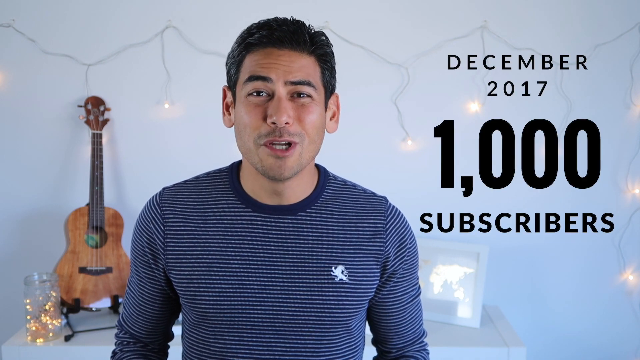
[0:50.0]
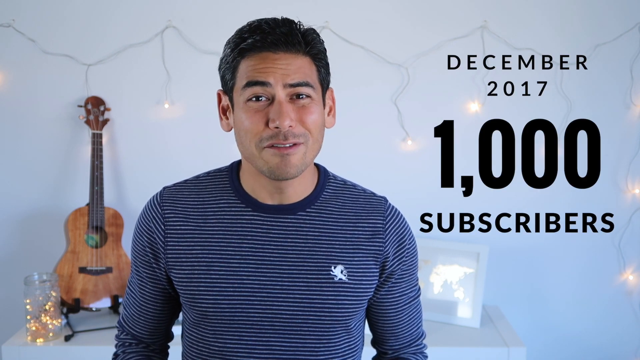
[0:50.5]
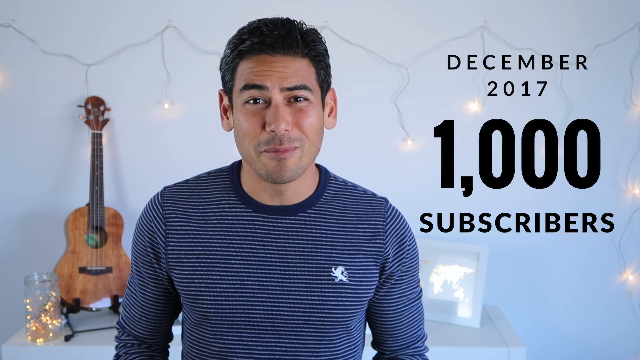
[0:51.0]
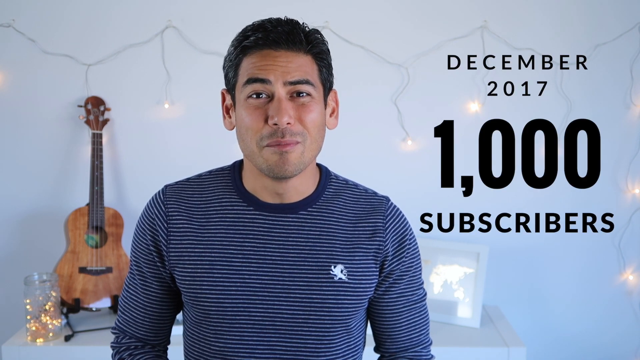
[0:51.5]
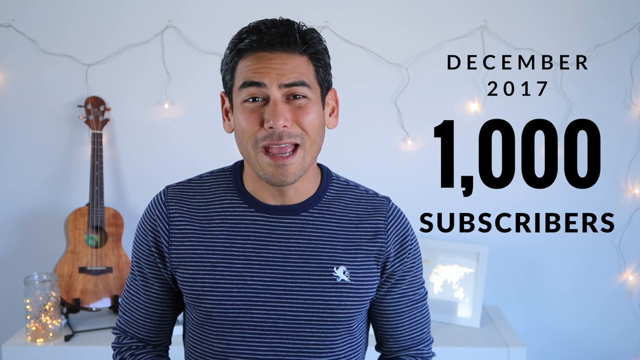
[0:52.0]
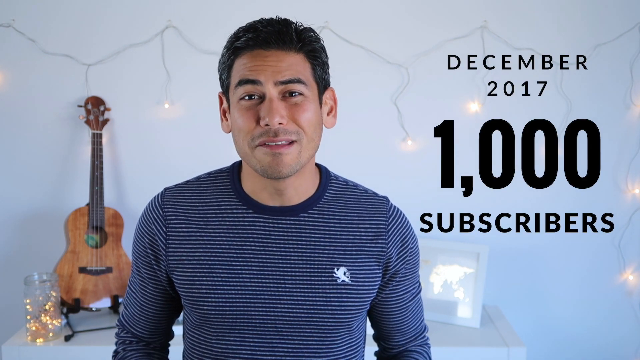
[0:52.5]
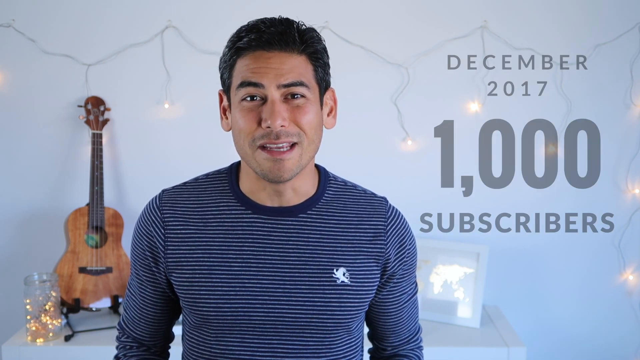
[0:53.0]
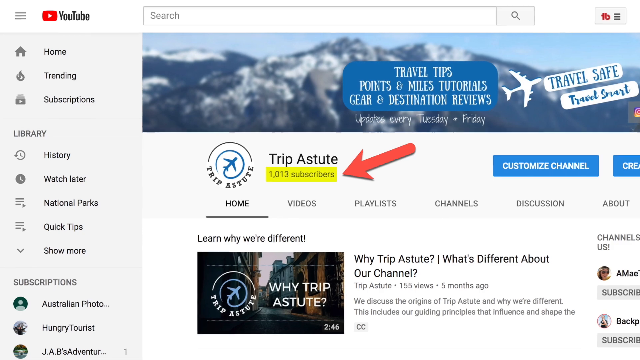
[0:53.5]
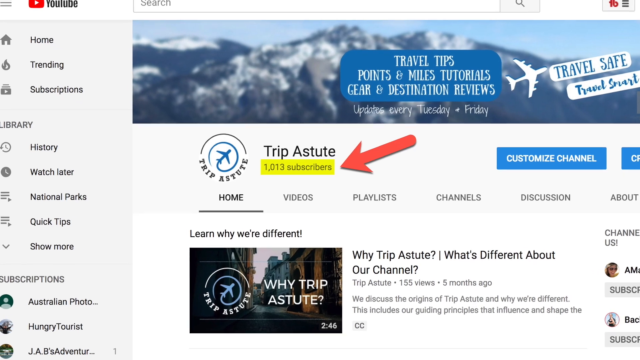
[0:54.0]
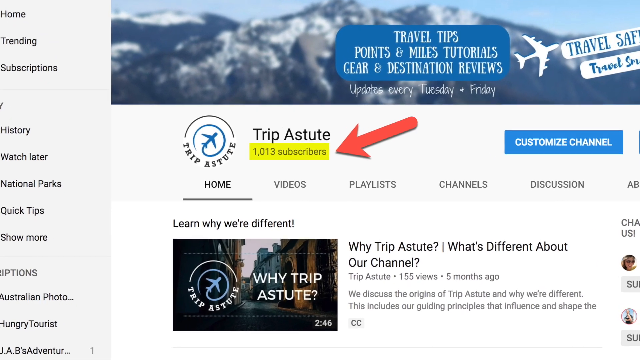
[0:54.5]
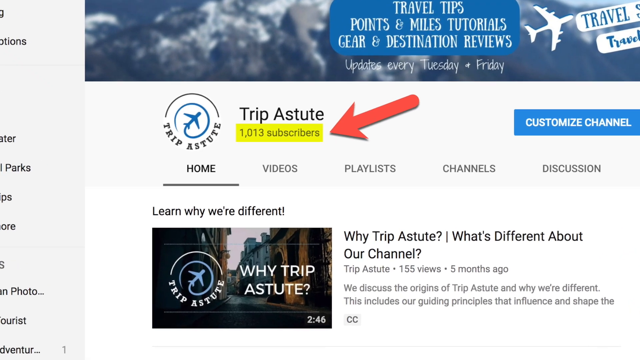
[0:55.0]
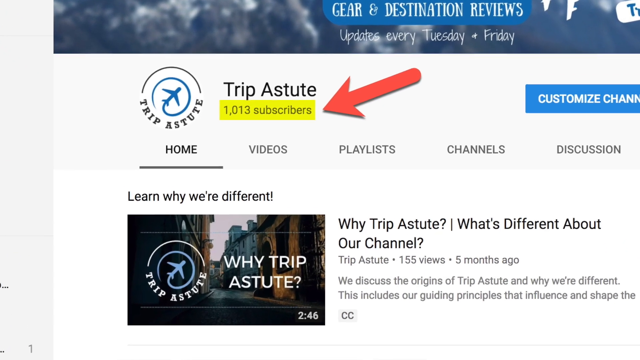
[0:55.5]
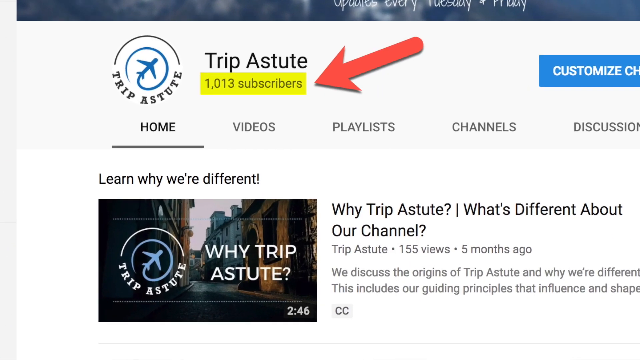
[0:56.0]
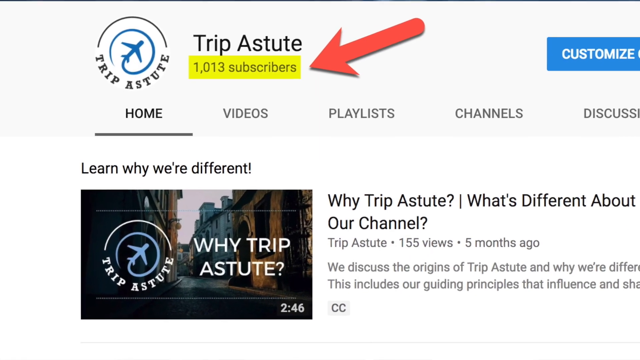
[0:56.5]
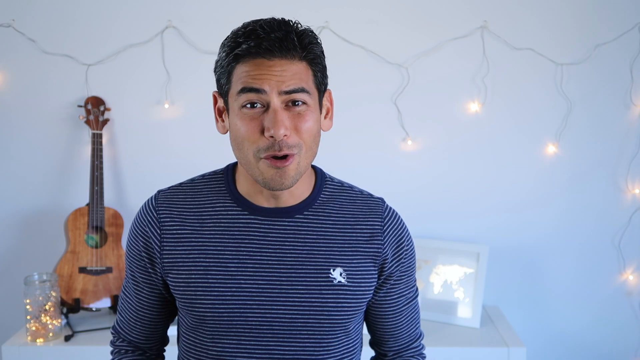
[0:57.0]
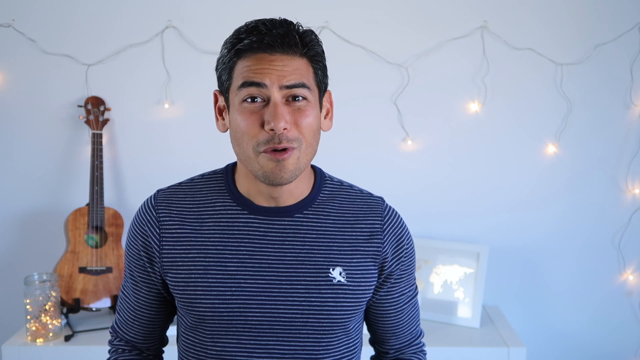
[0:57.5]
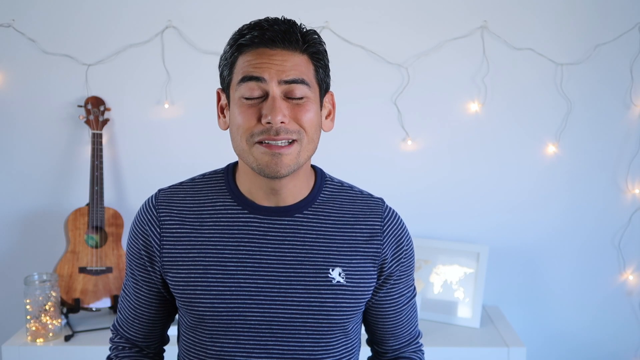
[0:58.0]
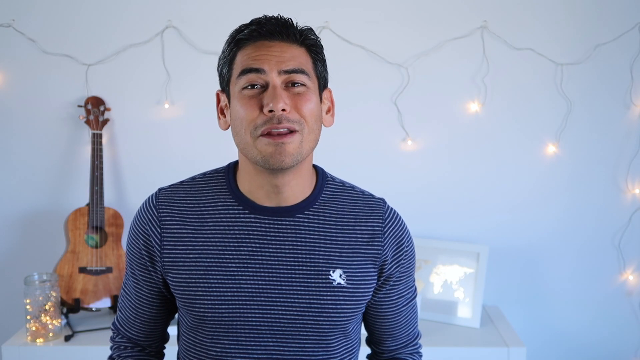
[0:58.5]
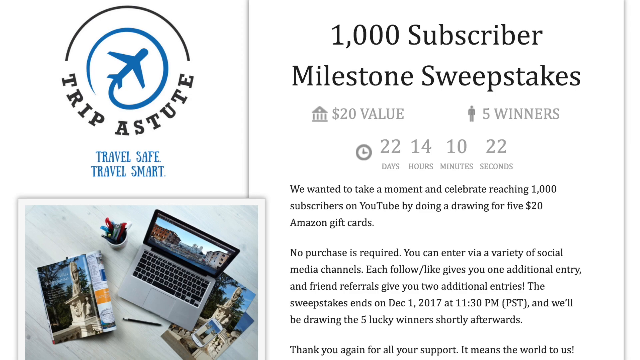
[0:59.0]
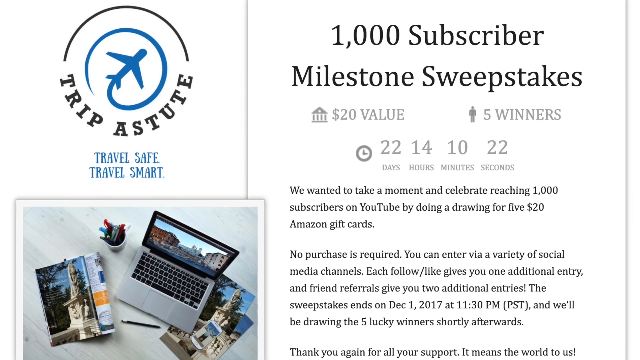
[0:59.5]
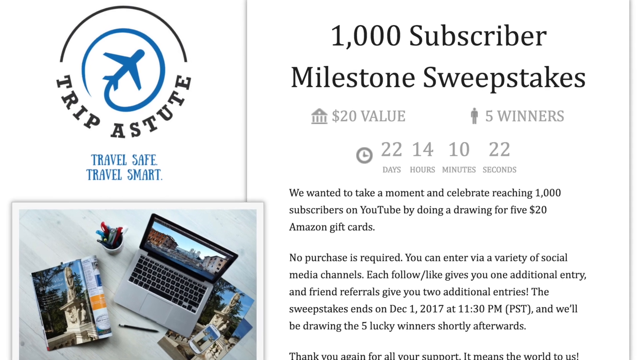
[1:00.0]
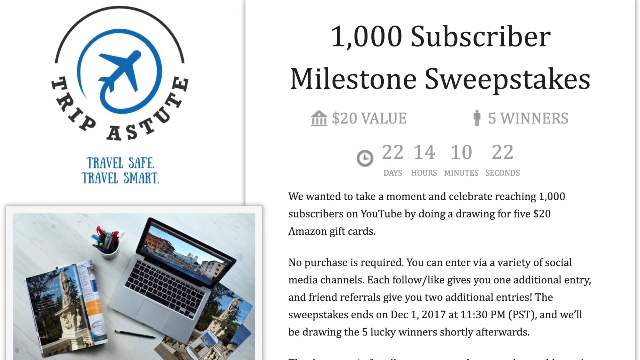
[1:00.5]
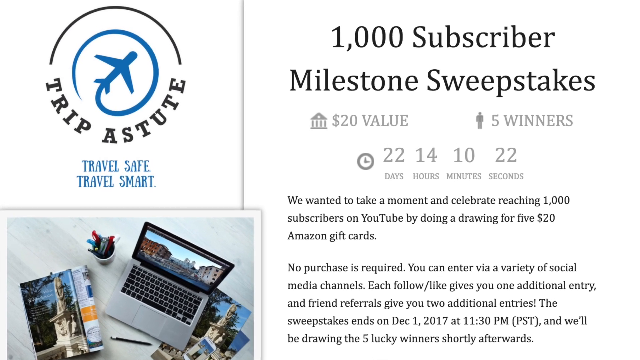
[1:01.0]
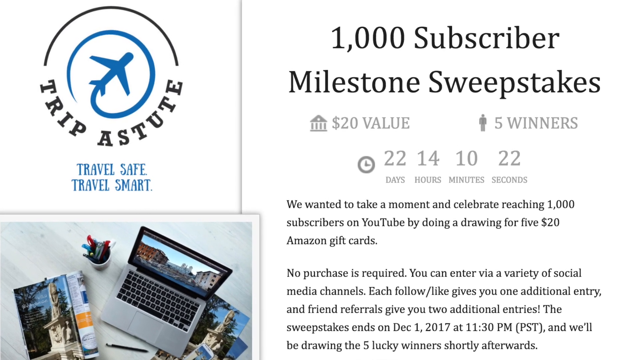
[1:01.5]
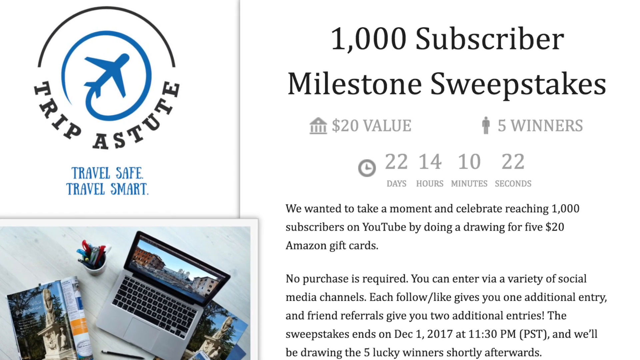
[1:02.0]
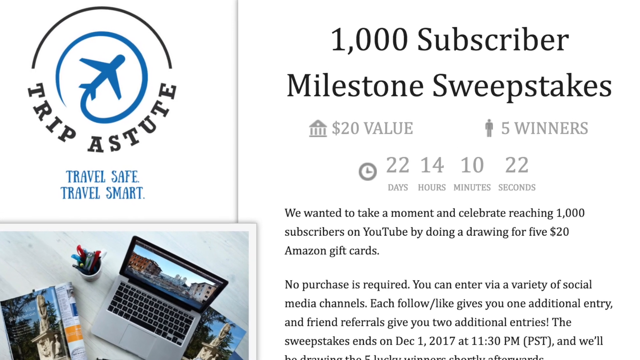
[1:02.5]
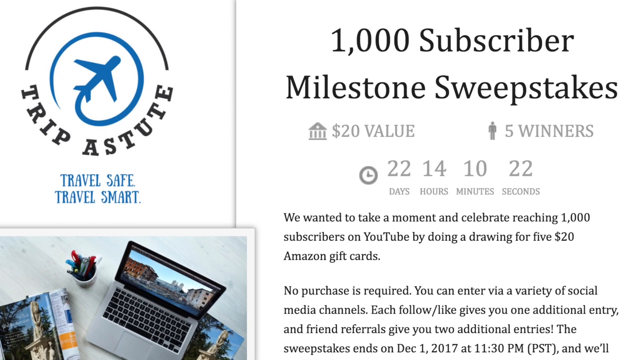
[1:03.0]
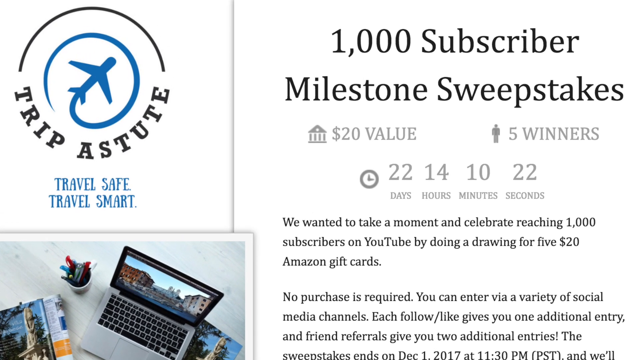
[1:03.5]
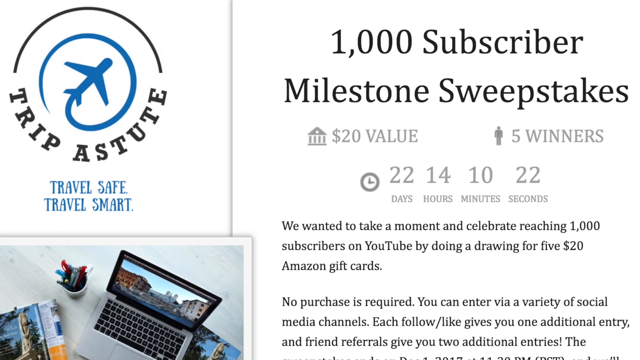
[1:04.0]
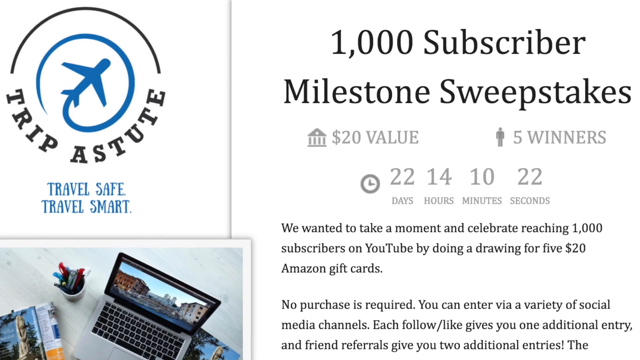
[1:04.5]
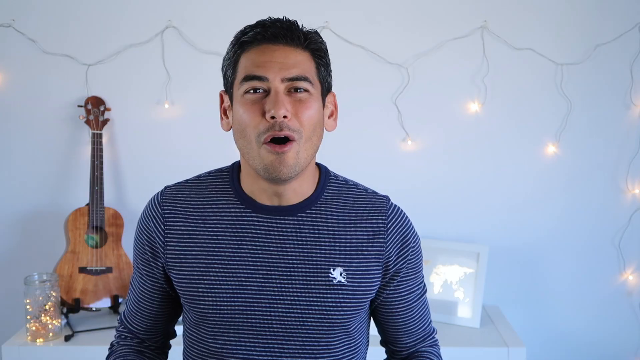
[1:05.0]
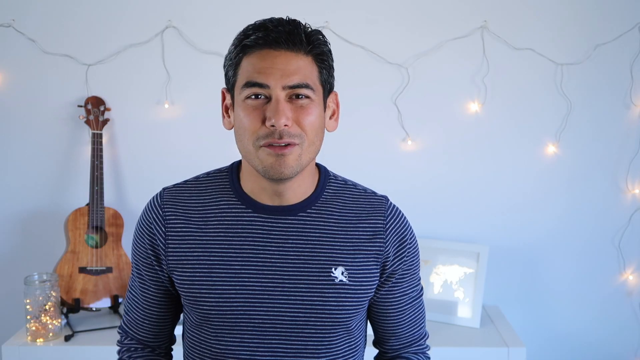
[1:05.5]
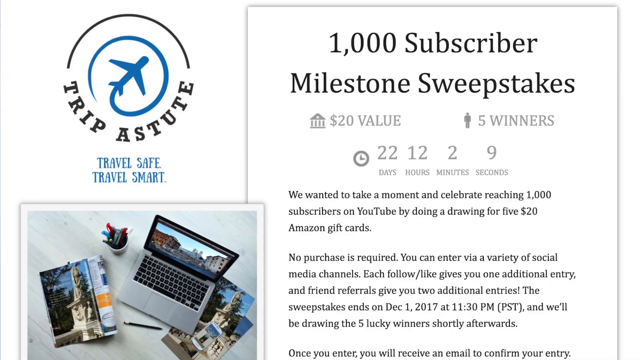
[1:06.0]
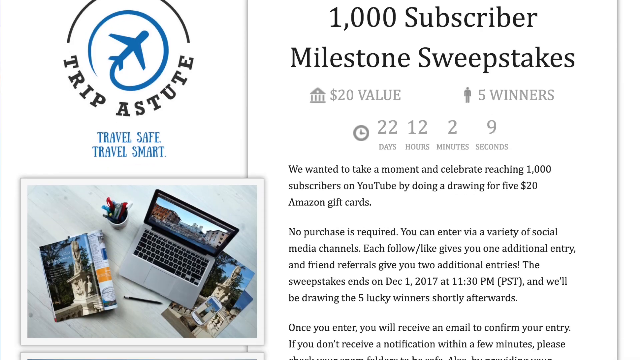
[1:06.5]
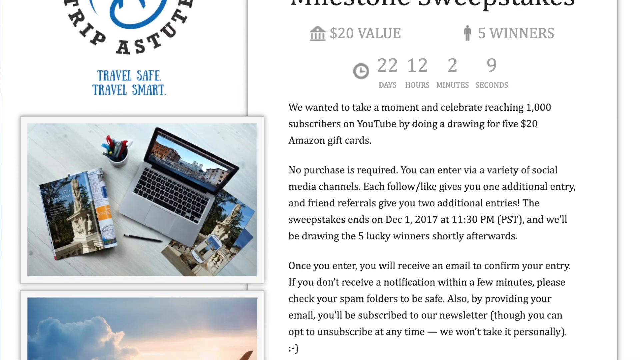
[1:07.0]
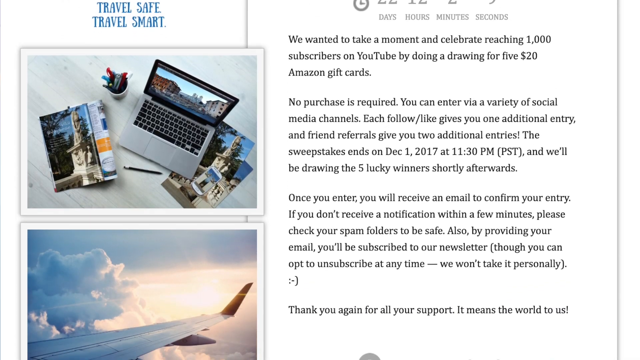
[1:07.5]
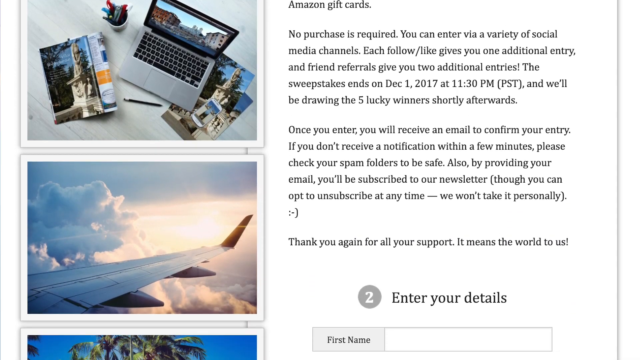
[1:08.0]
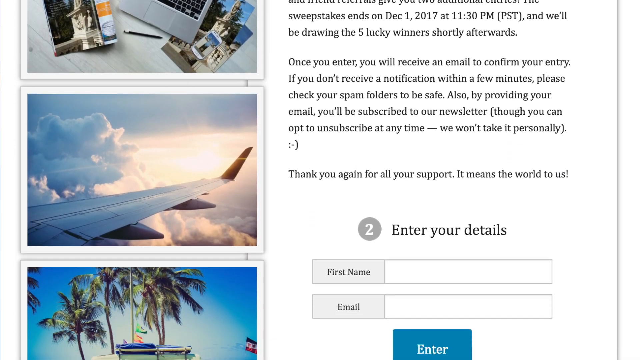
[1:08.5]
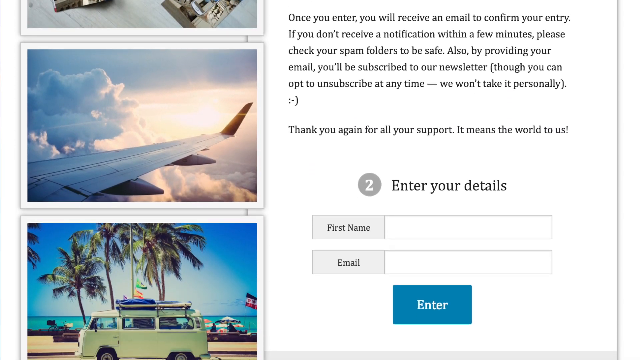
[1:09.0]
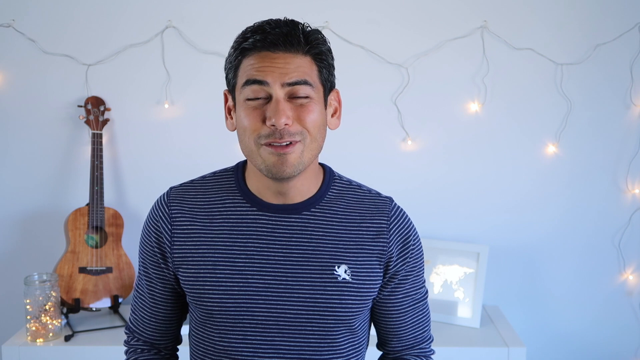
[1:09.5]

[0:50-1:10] A presenter in a blue and white striped top talks to the camera, and text on the right-hand side of the video reads "December 2017, 1000 subscribers". The video switches to a zoomed view of Trip Astute, his YouTube channel, and zooms in on the number of subscribers, 1013, which is highlighted in yellow with a red arrow pointing to it. It switches back to the presenter in his room with a guitar in the background. Next, a feature on his Trip Astute site reads "1000 subscriber milestone sweepstakes", with a $20 value prize and five winners, and a countdown of the days, hours, minutes and seconds until the sweepstakes completes; the view zooms in on this. The video then returns to the presenter in his room.